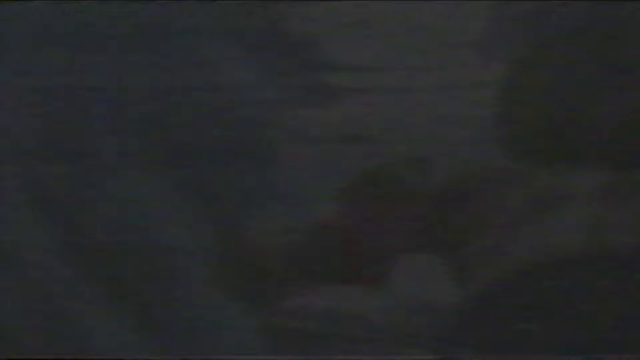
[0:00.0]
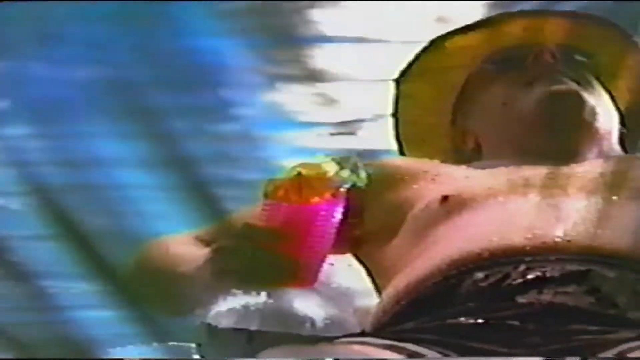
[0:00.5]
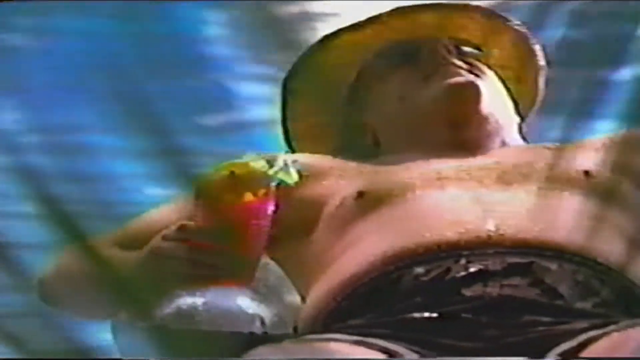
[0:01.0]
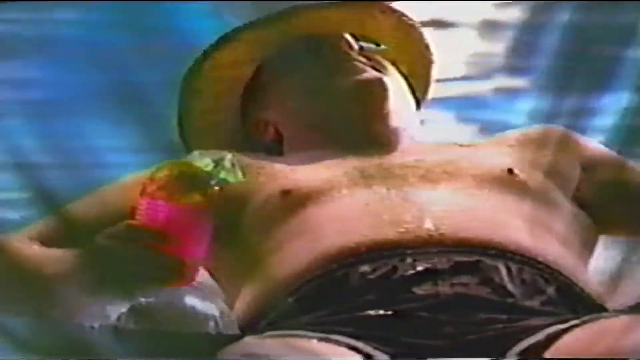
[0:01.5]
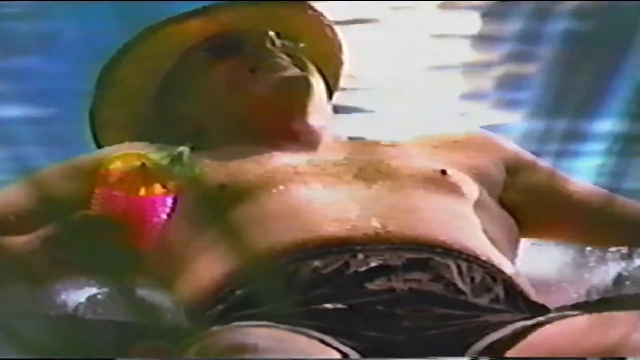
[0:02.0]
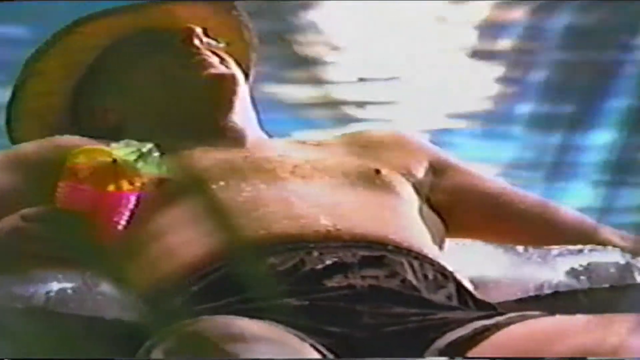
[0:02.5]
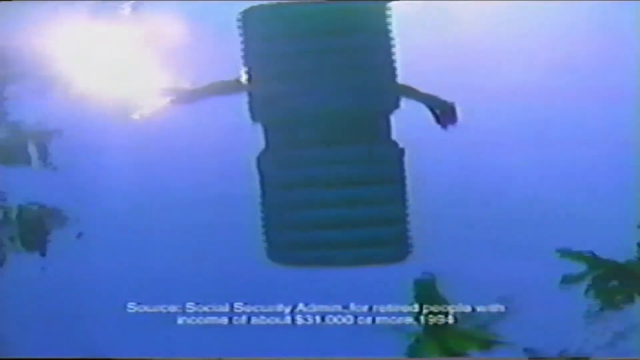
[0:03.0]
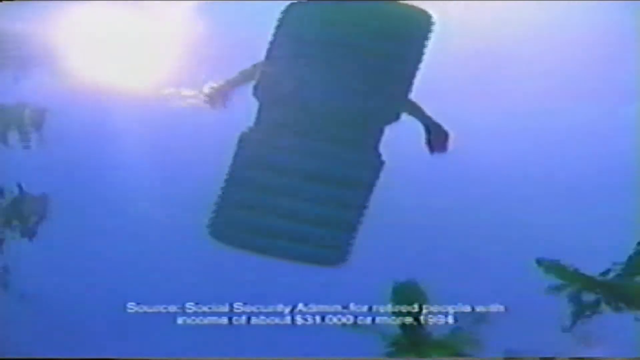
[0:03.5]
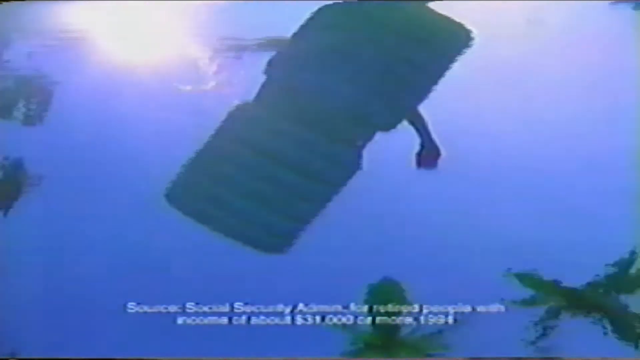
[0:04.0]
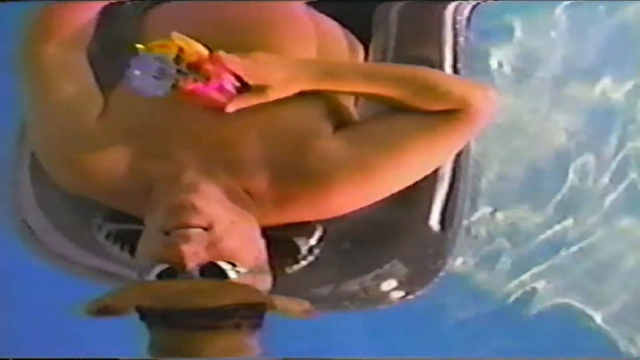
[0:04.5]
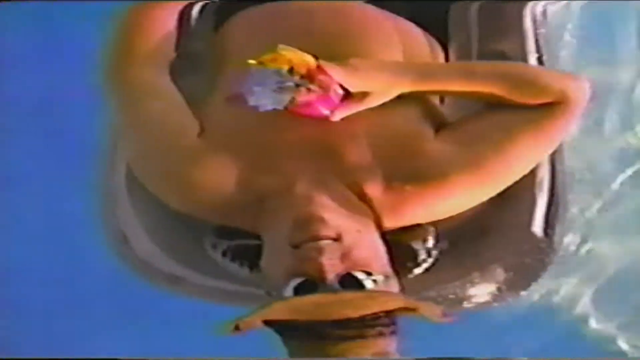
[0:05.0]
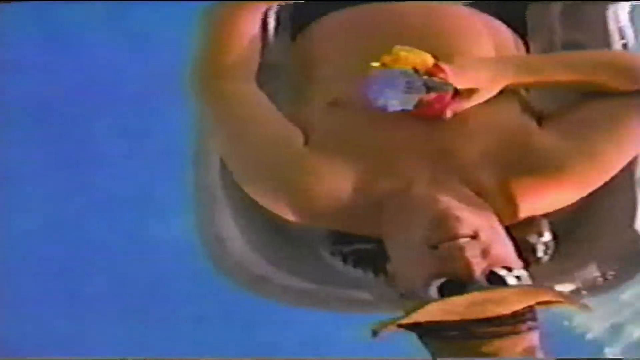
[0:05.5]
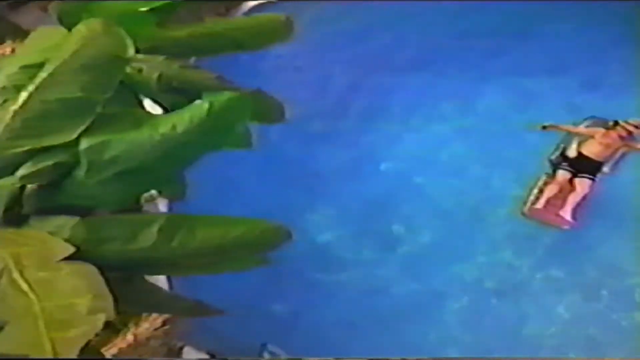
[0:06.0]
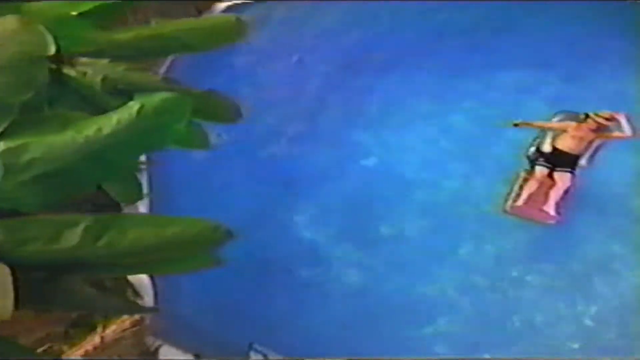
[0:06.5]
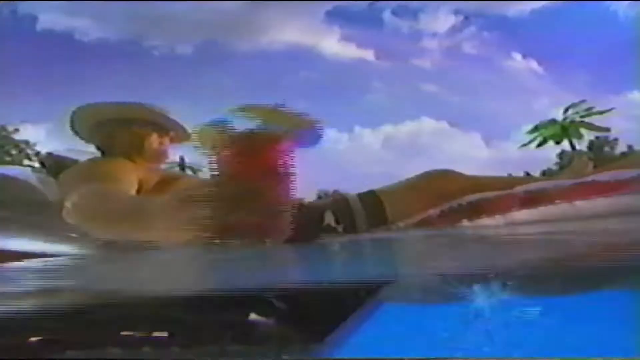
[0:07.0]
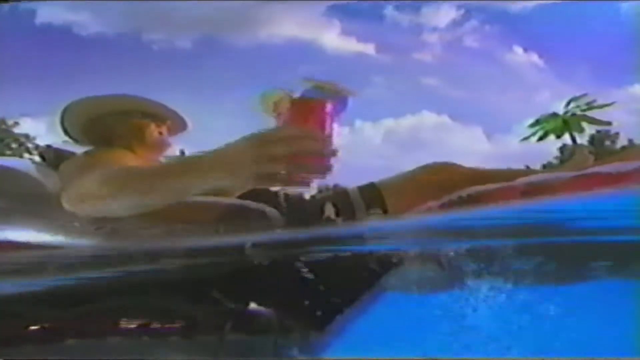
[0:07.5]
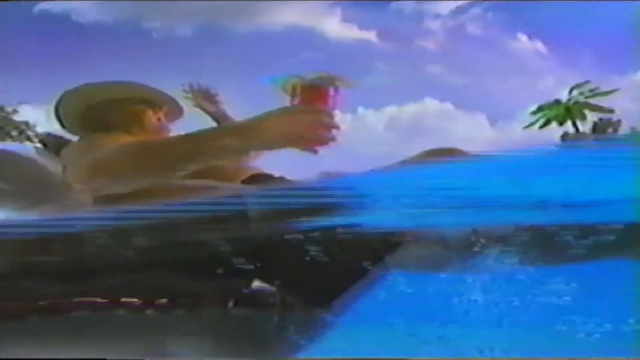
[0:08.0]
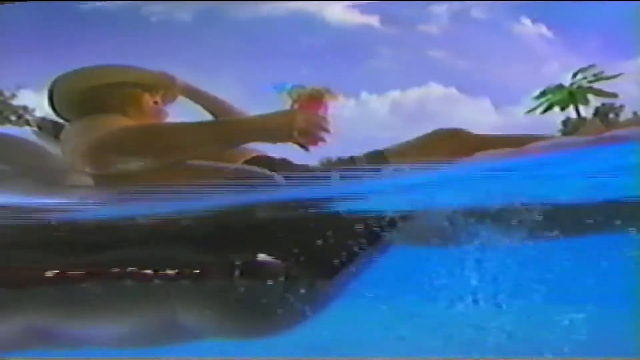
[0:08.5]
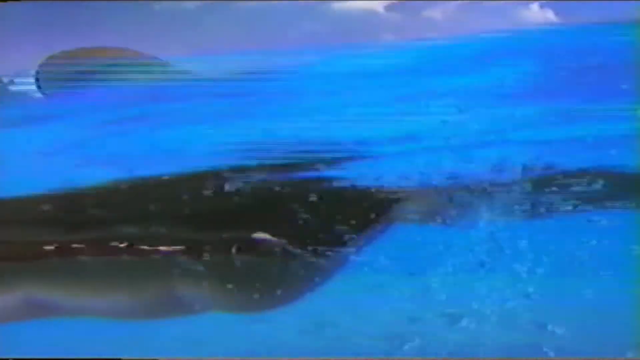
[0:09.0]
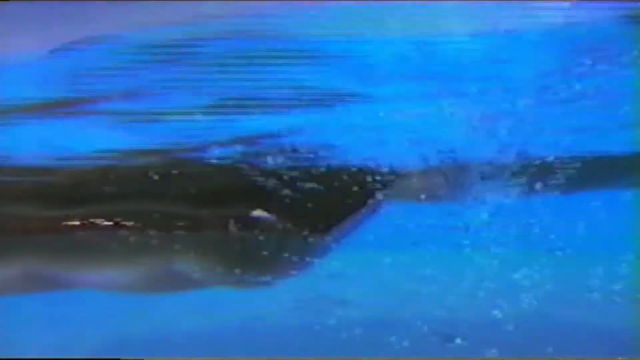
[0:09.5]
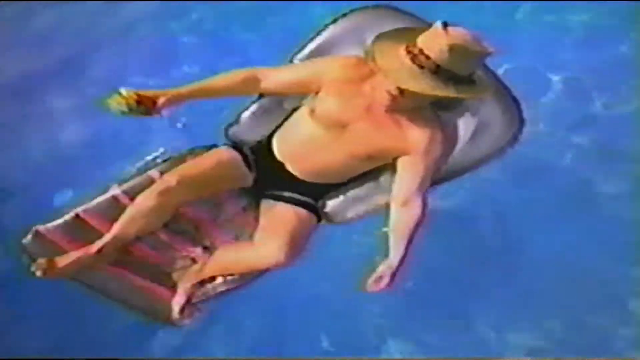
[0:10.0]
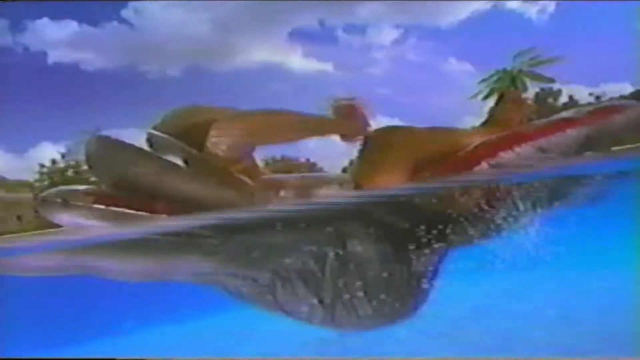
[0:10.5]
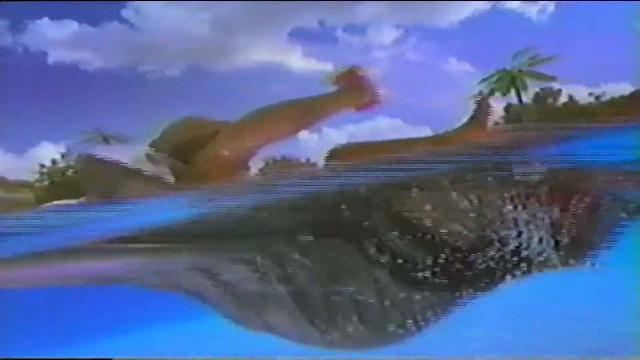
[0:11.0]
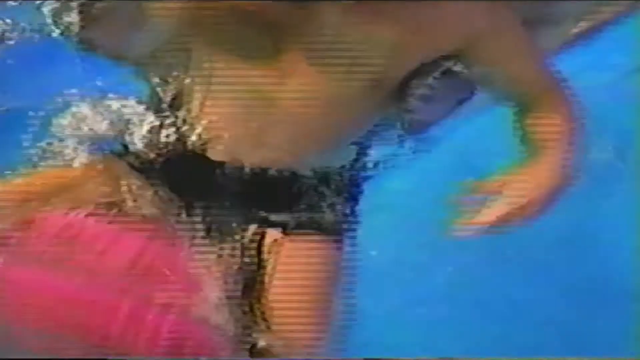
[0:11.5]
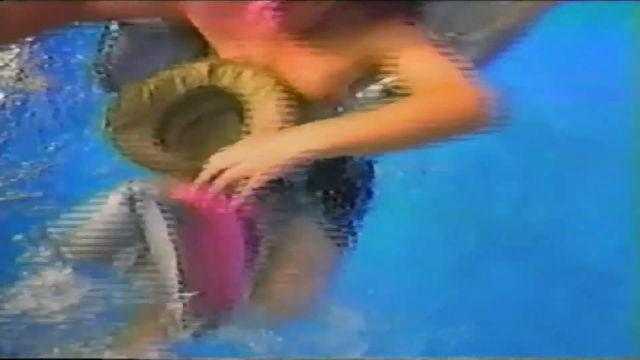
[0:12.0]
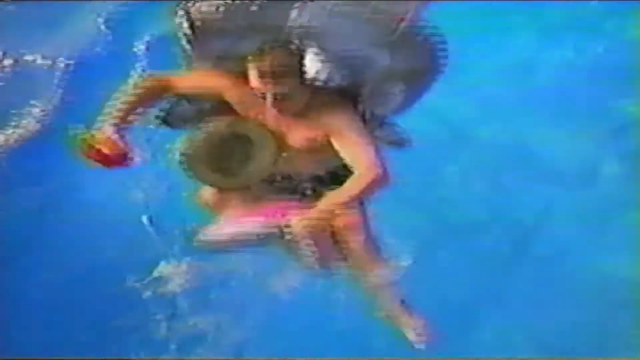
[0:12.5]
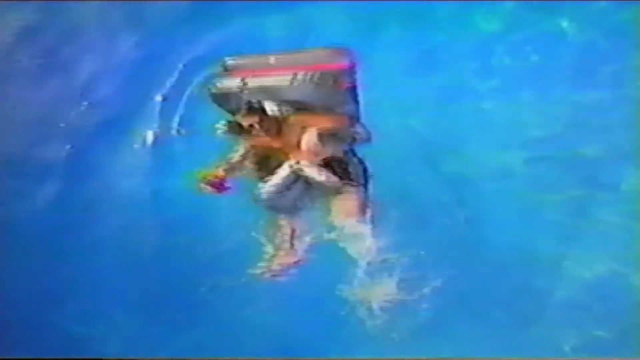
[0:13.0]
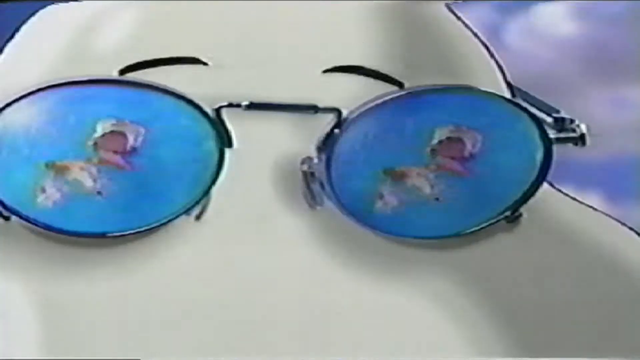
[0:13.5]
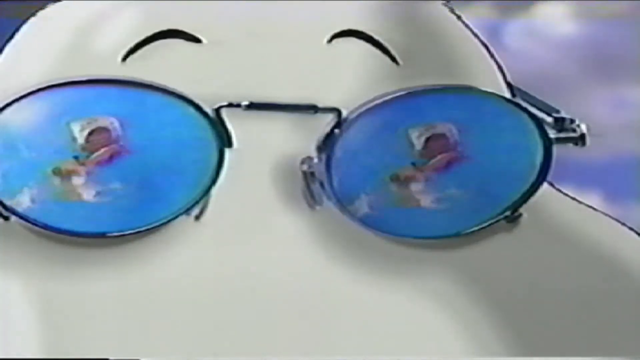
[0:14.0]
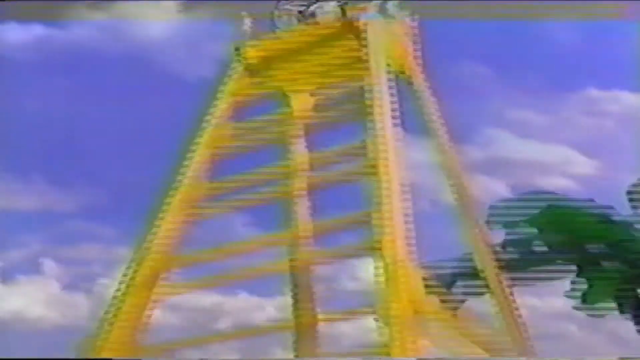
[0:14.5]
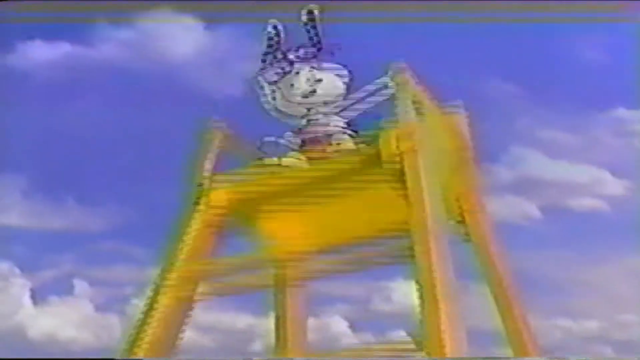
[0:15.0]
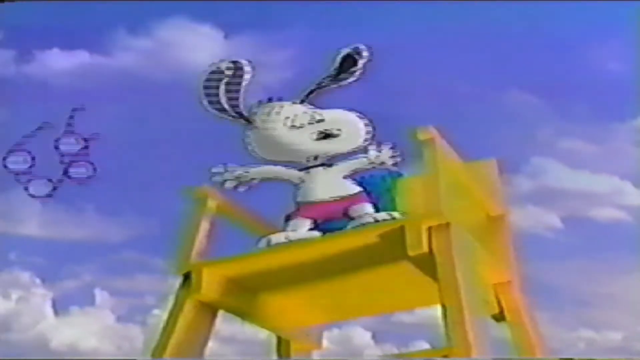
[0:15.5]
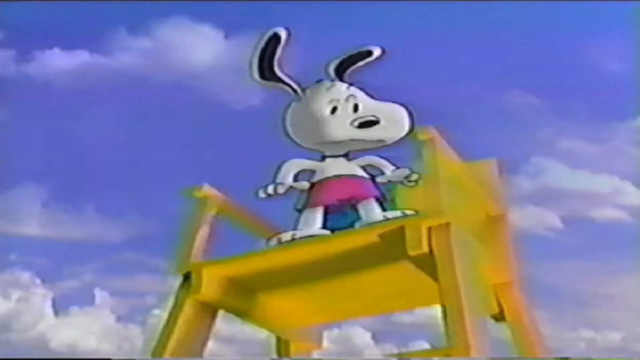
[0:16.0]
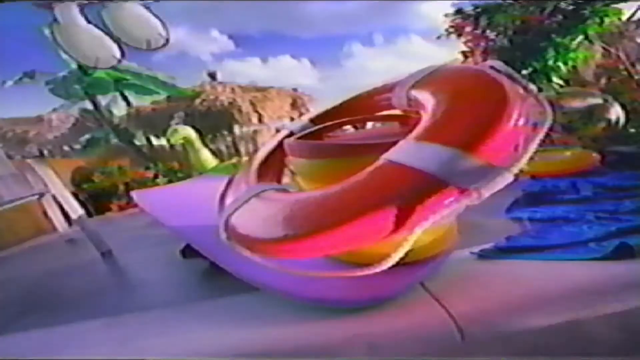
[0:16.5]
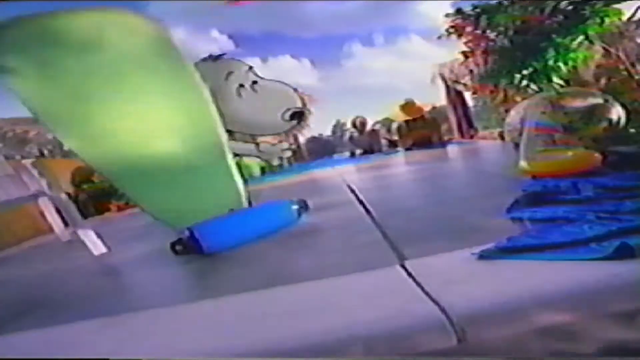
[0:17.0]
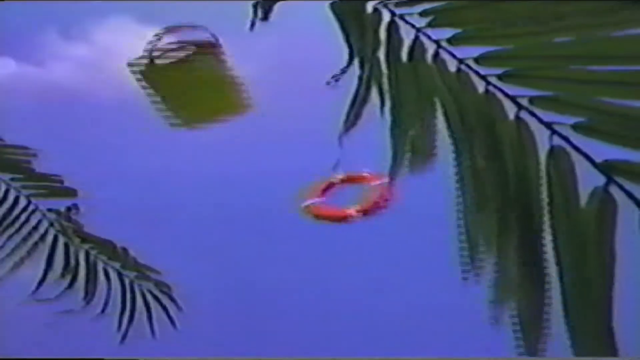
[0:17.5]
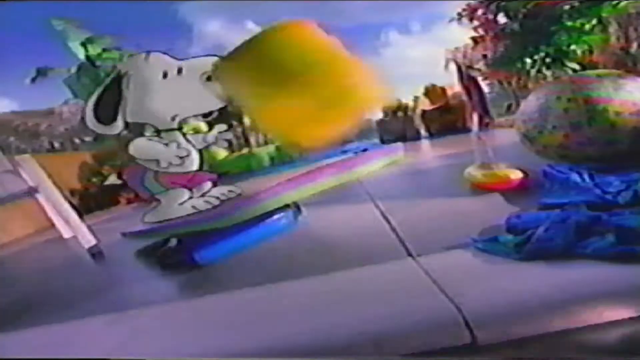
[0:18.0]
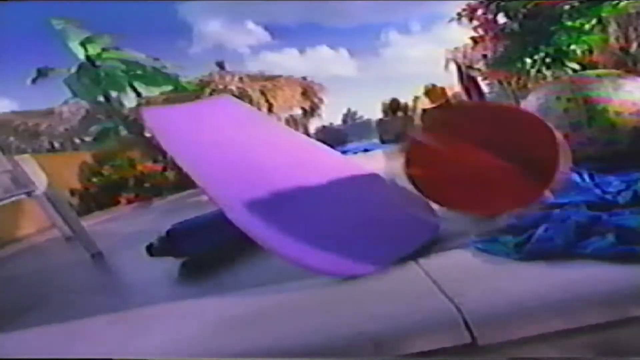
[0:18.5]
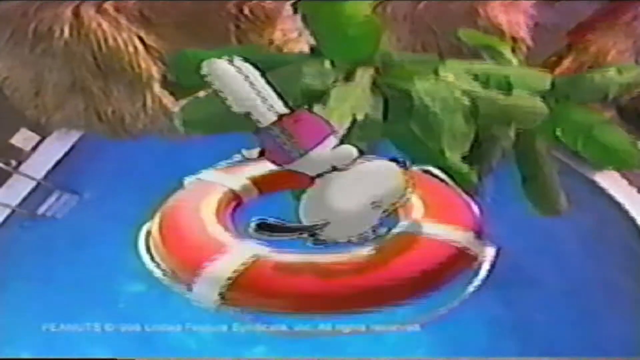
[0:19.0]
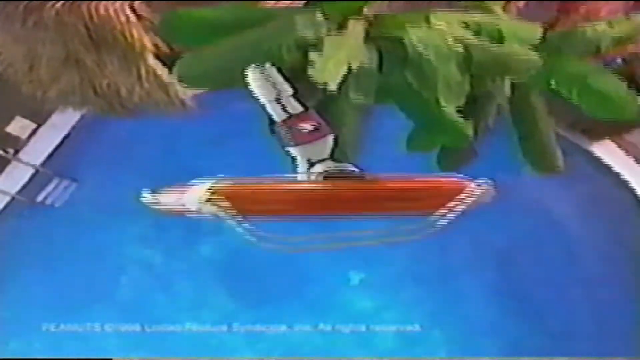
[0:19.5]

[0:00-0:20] On a hot, sunny day, a man floats in the middle of a swimming pool on an inflatable pool bed. He wears a yellow sun hat and dark sunglasses, and in his right hand he holds what appears to be a pink, ice-cold drink. The sun shines down on the blue water of the pool, and green leaves from a tree are visible. The man is shirtless and wears black shorts. The top part of the pool bed's cushion is gray, and the bottom part, toward his legs, is pink. He is the only one in the pool, as the camera zooms out to an aerial view; on the left side of the screen are large green trees with large green palm fronds. The view then shifts underwater, showing the underside of the pool bed and bubbles in the pool. The man starts to sink. The camera then shows a cartoon image of a white dog with black ears, Snoopy from the Peanuts gang, wearing glasses and pink shorts. He sees the man beginning to drown and jumps off the watchtower.